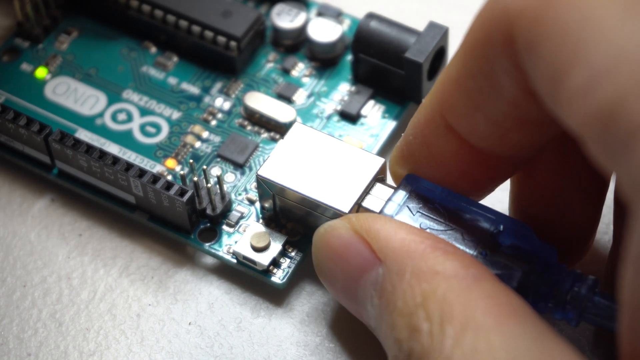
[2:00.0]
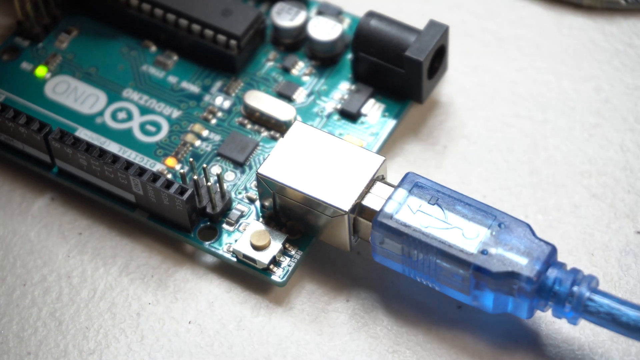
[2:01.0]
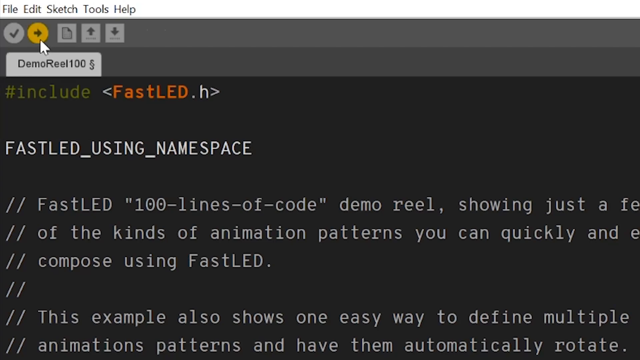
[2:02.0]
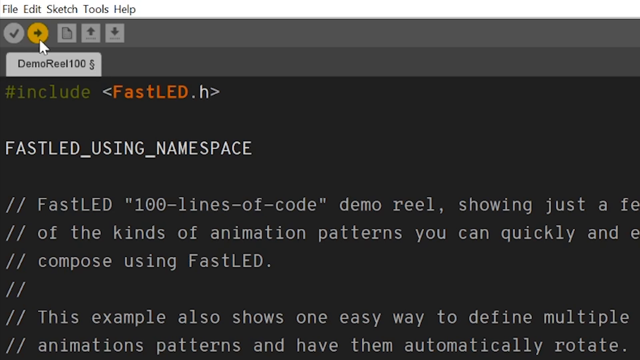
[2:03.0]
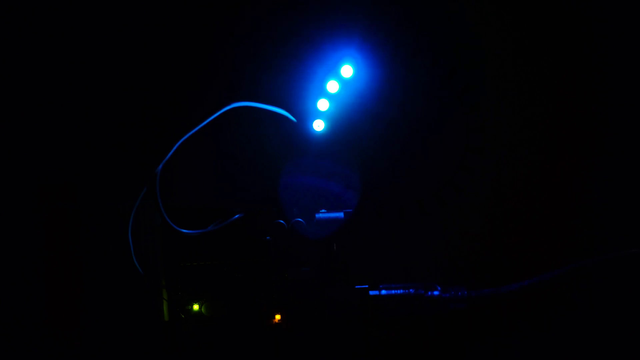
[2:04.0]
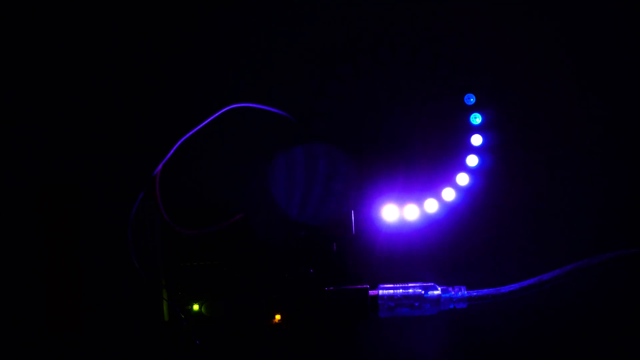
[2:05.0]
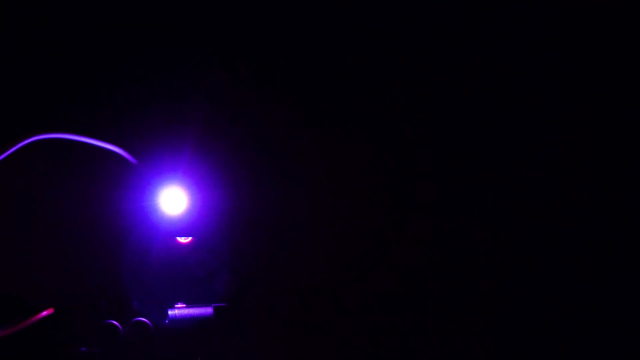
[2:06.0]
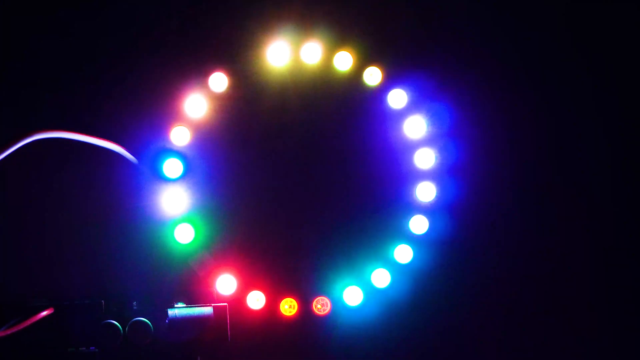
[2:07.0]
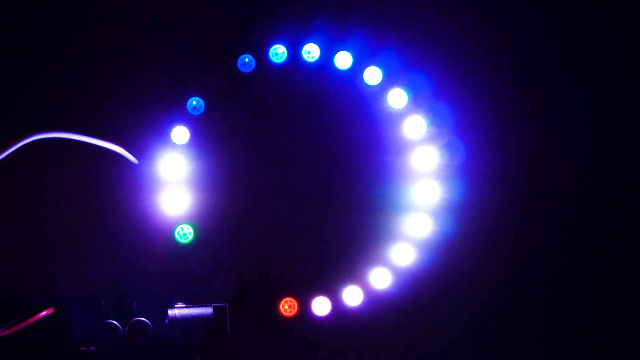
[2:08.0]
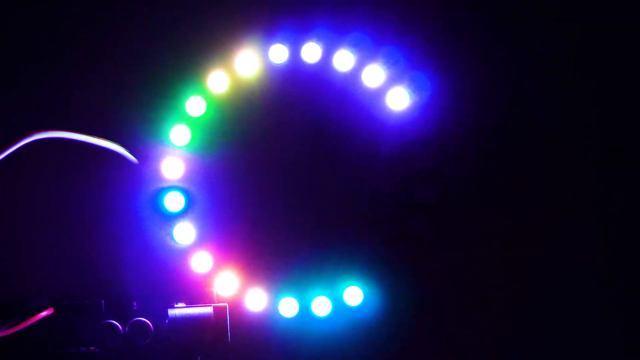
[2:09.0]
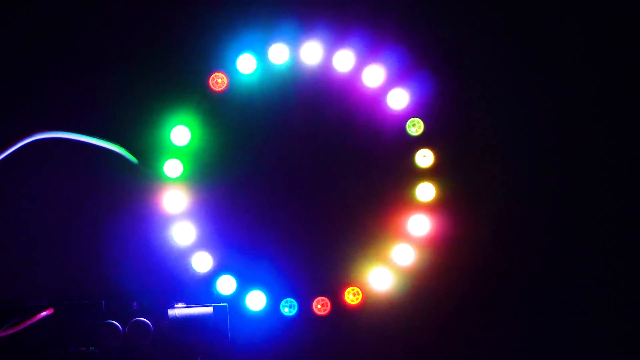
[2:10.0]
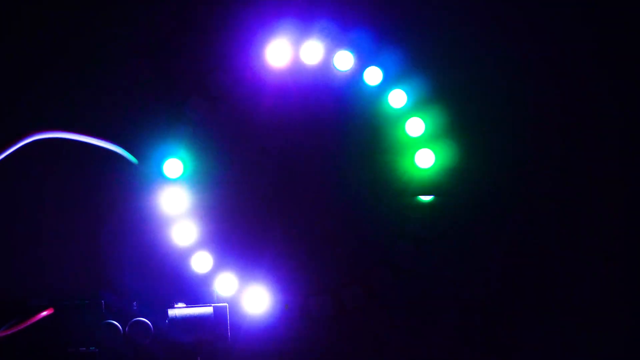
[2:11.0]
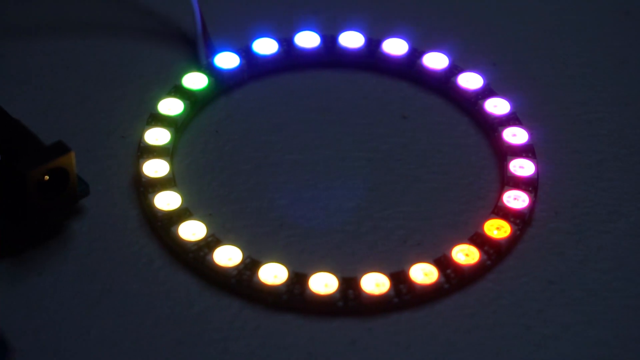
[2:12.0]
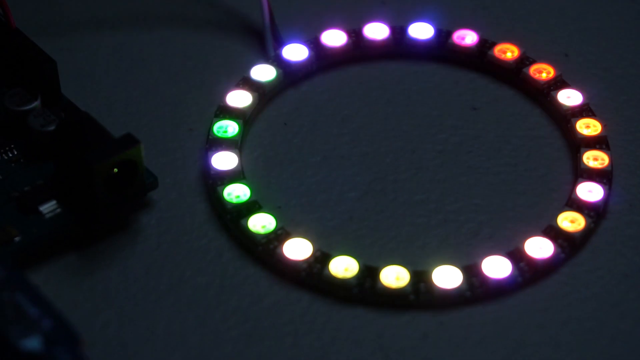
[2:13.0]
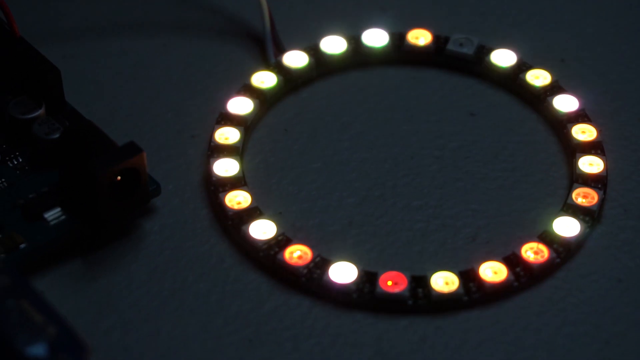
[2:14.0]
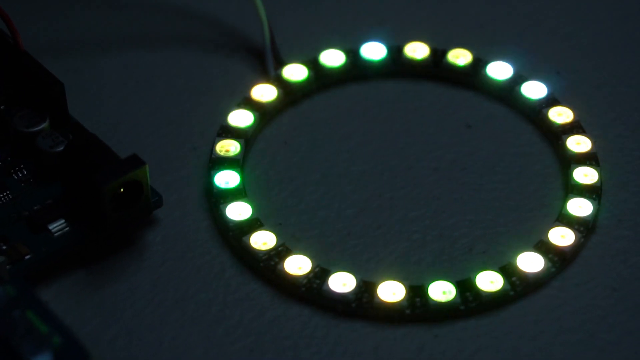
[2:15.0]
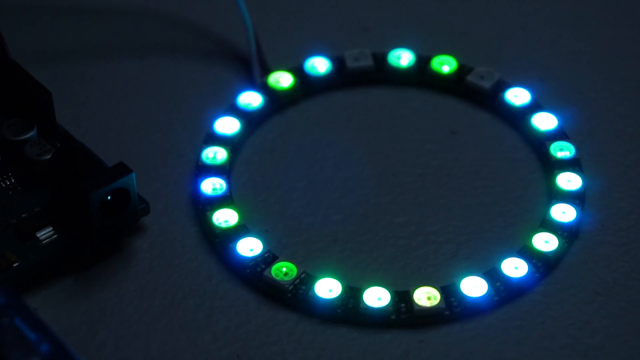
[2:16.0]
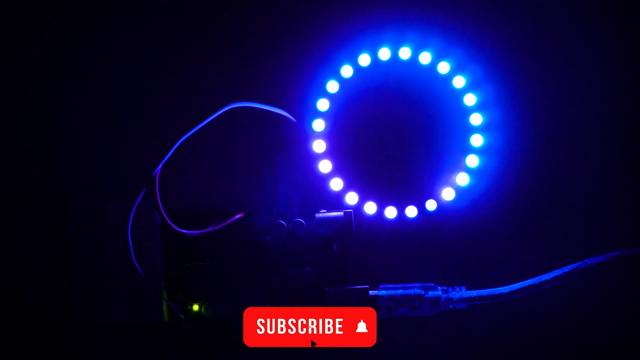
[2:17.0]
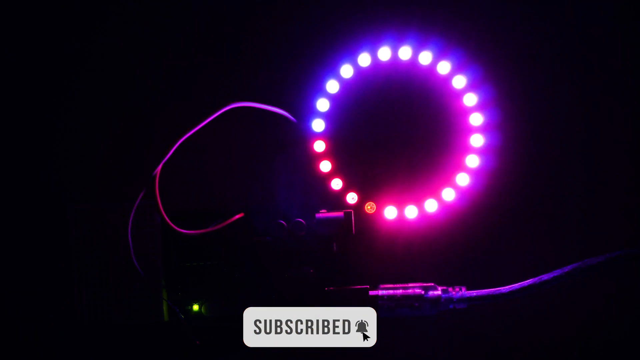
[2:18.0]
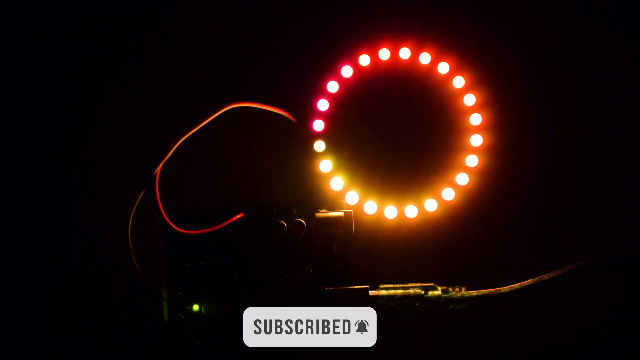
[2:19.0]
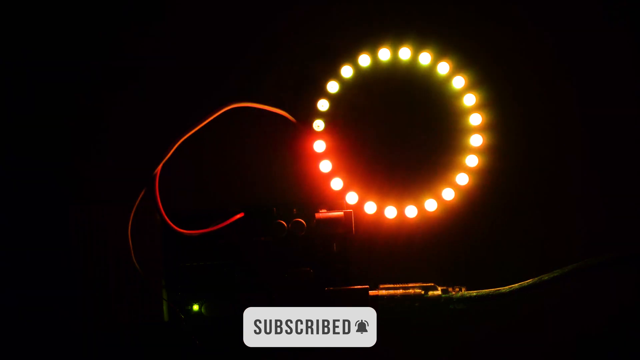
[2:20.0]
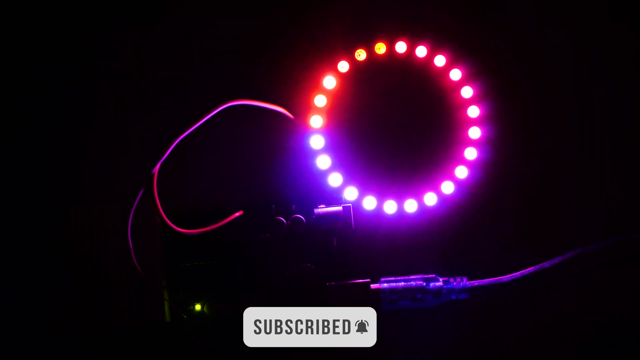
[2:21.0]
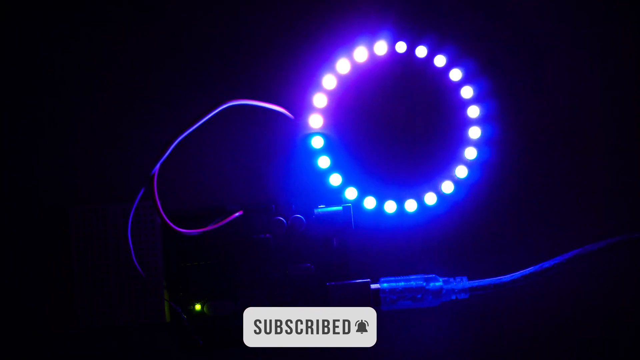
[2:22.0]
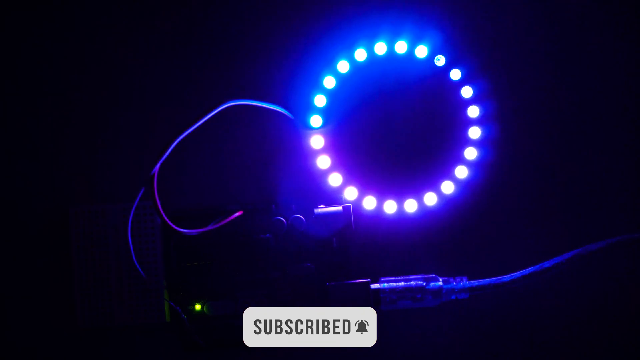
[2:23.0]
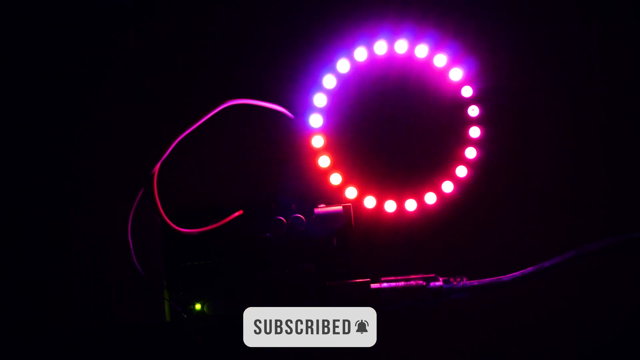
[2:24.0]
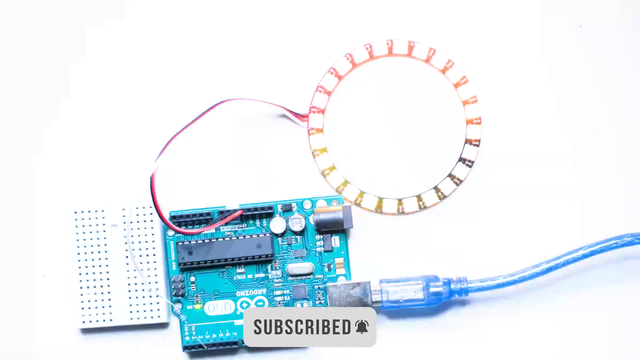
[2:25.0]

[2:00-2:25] A close-up shows someone inserting a USB or charger-like device into a silver rectangular box on the side of a small rectangular circuit. The video transitions to a close-up of the top left of a terminal, showing the top of the document with several comments about what FastLED is, and the second tab at the top left says "Demo Reel 100" with the mouse hovering over it. A very dark shot follows, illuminated by circular rotating neon lights in purple, red, blue and yellow, with circular shapes forming a broader circular pattern; the circles appear and reappear in oscillating, rotating patterns. Next, the neon rotating circular device is shown on the floor, glowing in the patterns against a less dark background. The very dark shot returns, with the neon circular lights rotating in orange, red, blue and purple, and a white box appears at the bottom of the screen that says "Subscribe."